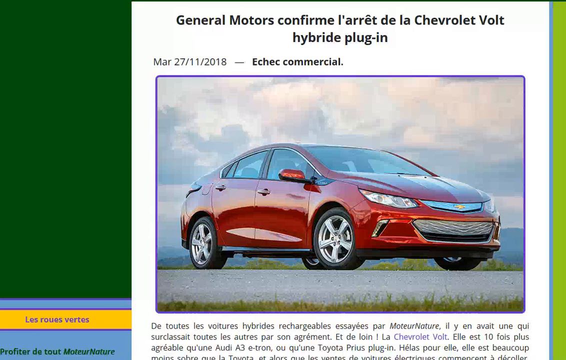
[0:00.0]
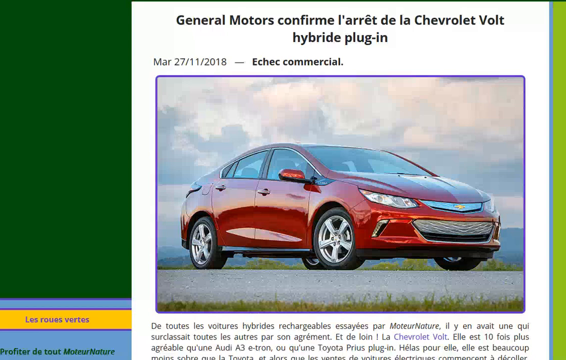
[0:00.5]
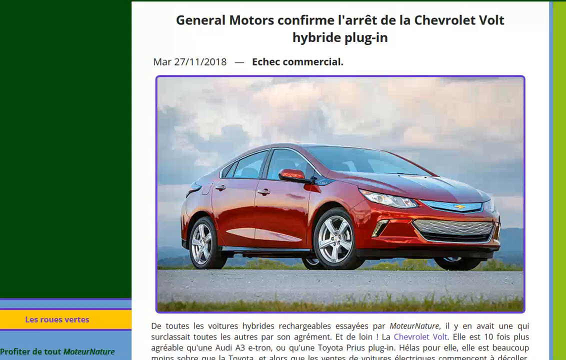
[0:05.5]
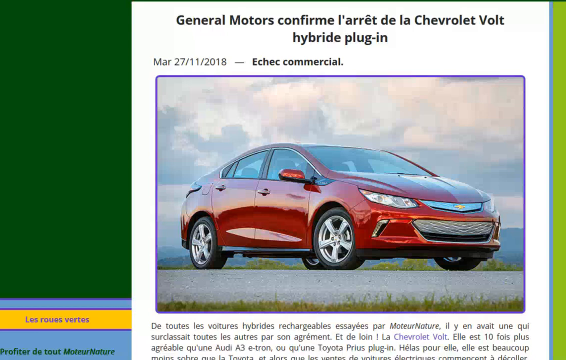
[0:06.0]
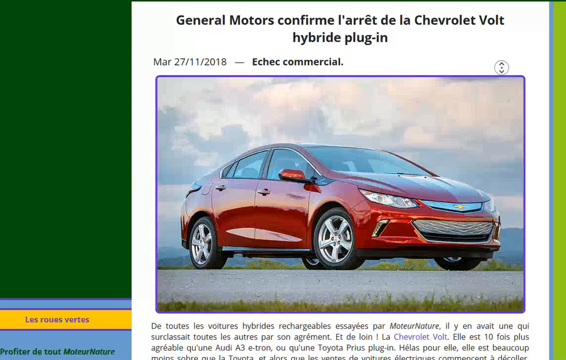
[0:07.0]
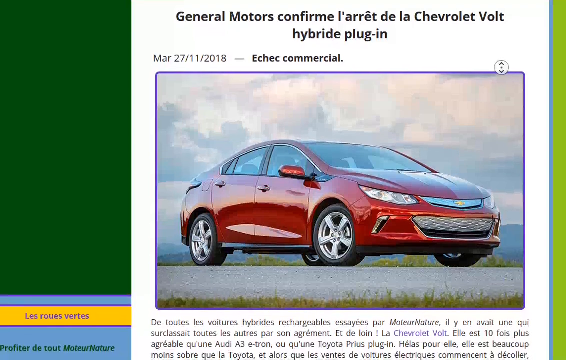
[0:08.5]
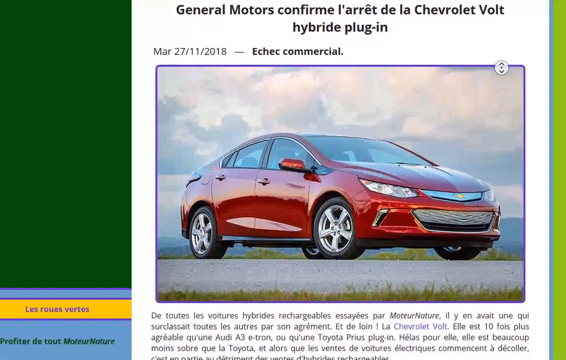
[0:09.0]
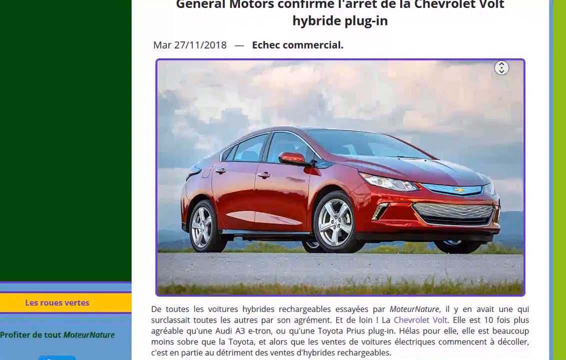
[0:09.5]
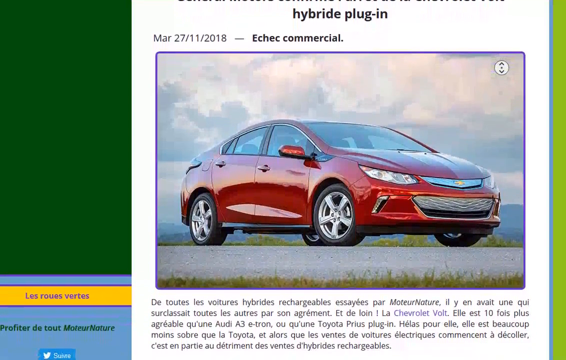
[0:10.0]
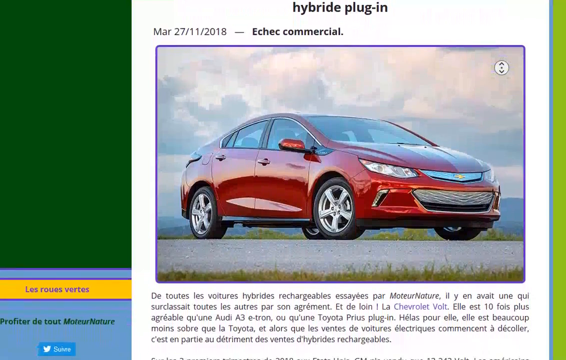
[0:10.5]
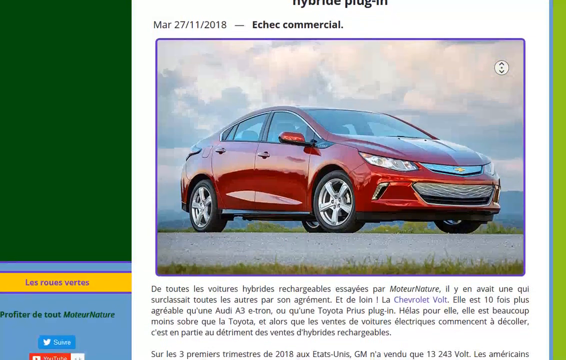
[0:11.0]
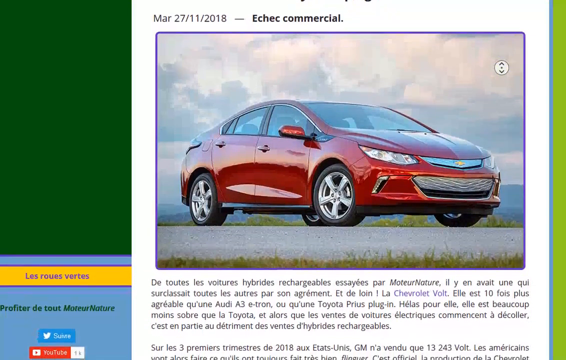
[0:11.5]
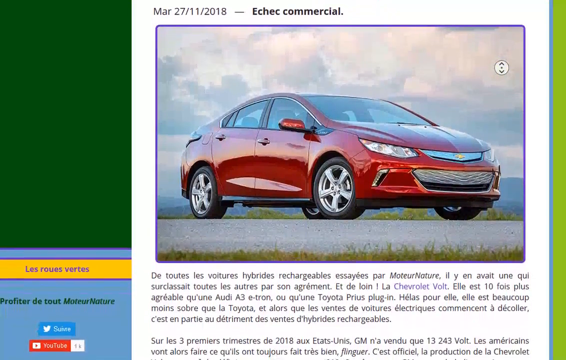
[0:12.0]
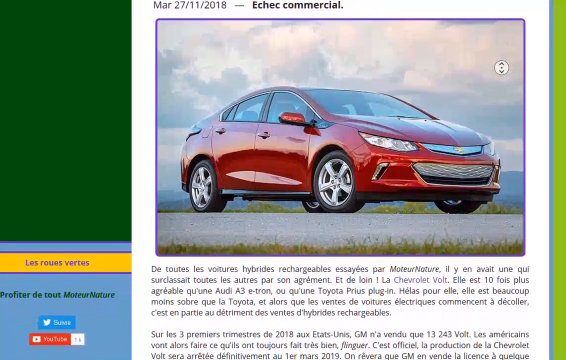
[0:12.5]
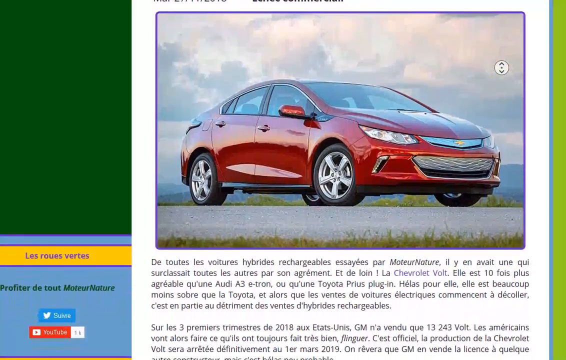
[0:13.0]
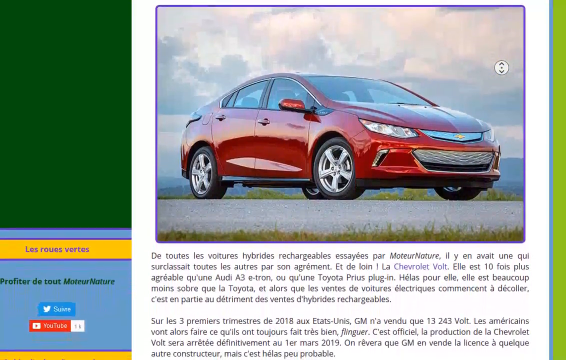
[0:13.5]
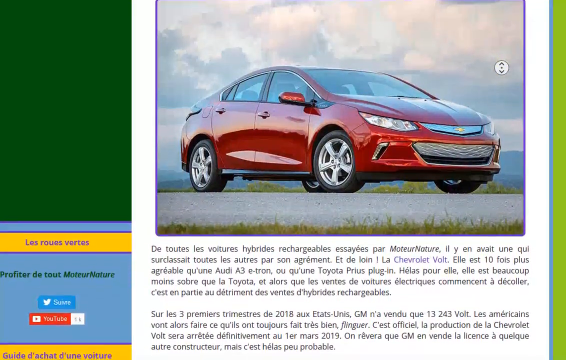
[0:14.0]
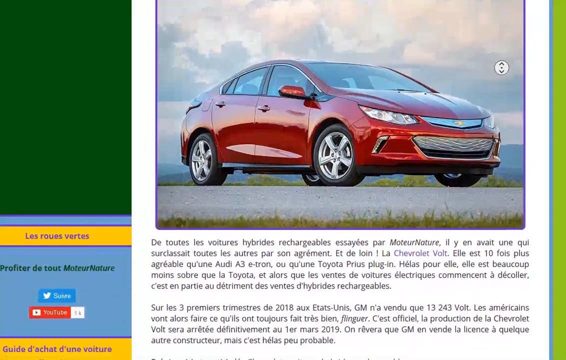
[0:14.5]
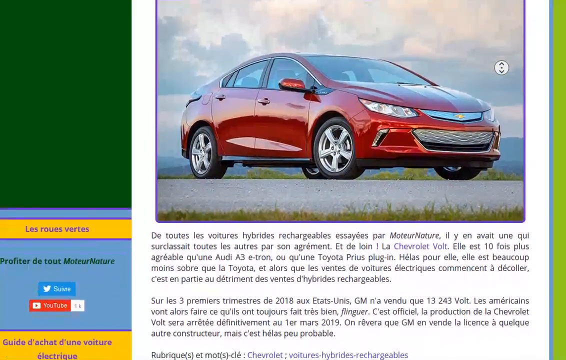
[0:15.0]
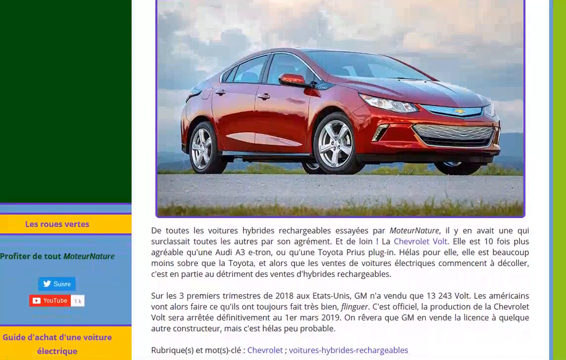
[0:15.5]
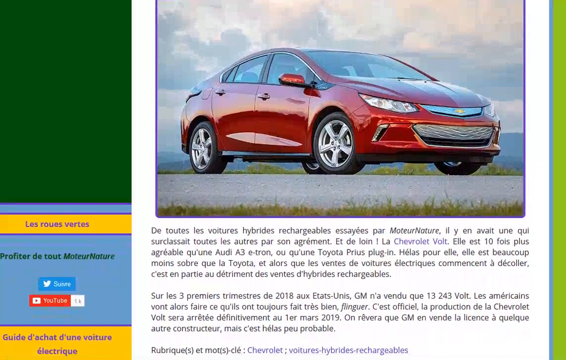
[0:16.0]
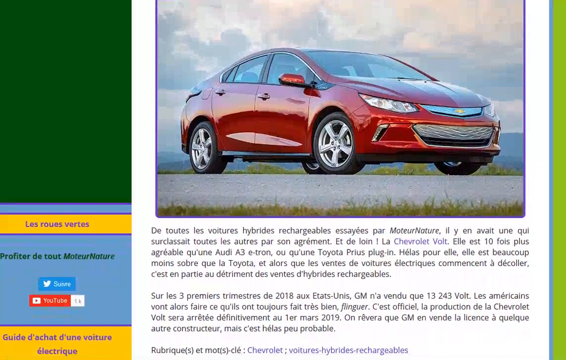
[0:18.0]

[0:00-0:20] A car appears on the right side of the frame: a Chevrolet Volt, a plug-in hybrid by General Motors. The car is dark red and has four doors; it looks like a sedan. The view moves down, revealing a description of the car at the bottom, with the picture on the right side above it. The image is taken from a website, and the description is written in a foreign language. To the left, next to the description, there is a YouTube link and a Twitter link. In the picture, the car is parked in an open area on light gray ground, with quite large clouds in the sky above.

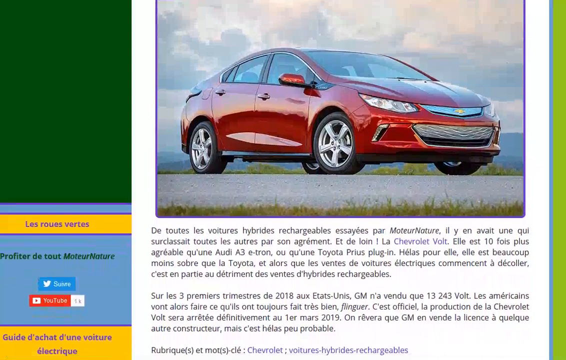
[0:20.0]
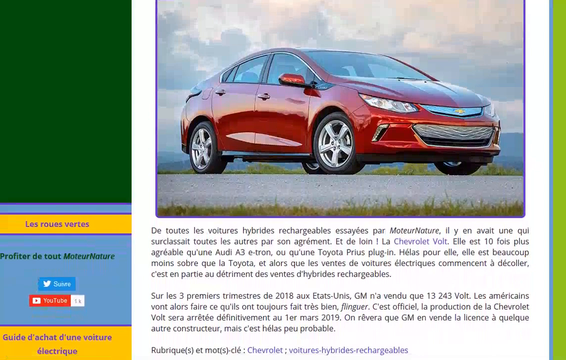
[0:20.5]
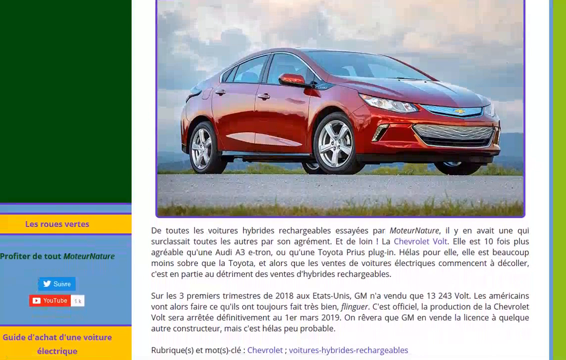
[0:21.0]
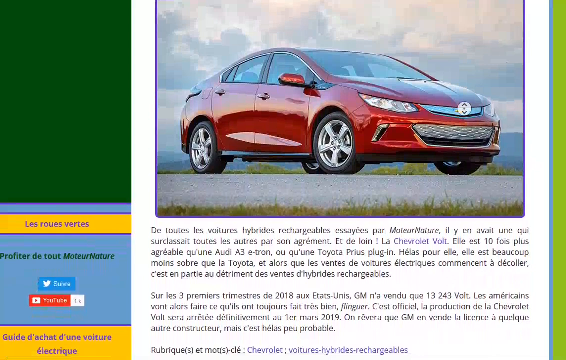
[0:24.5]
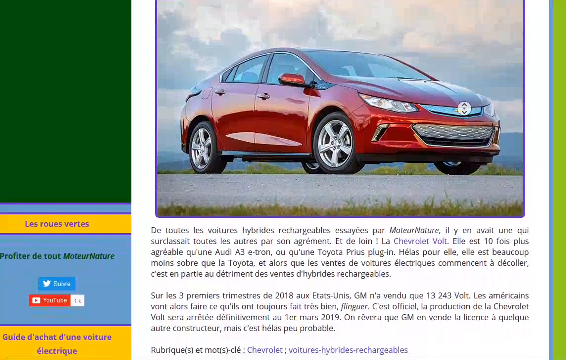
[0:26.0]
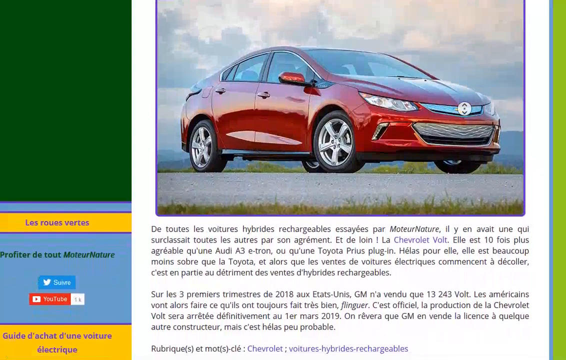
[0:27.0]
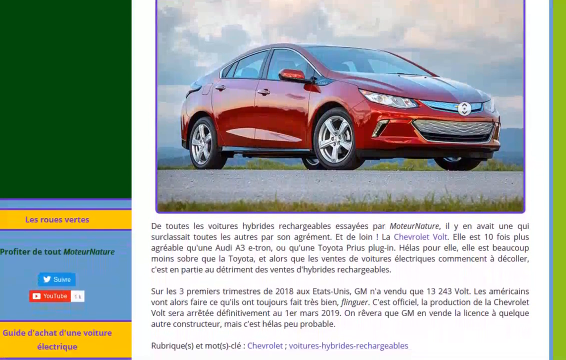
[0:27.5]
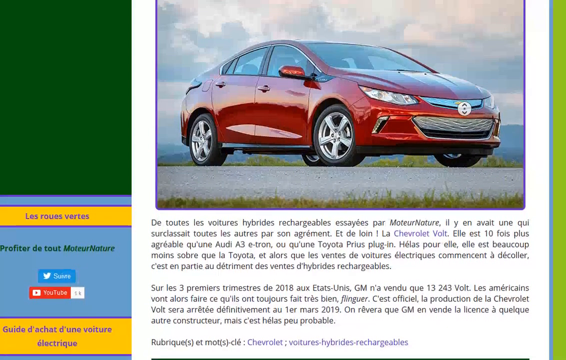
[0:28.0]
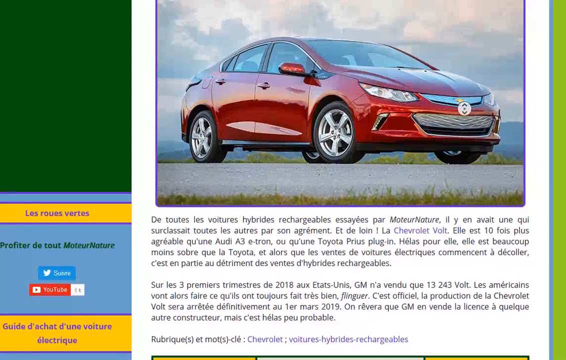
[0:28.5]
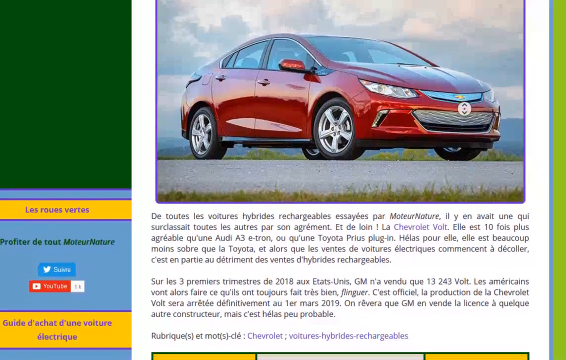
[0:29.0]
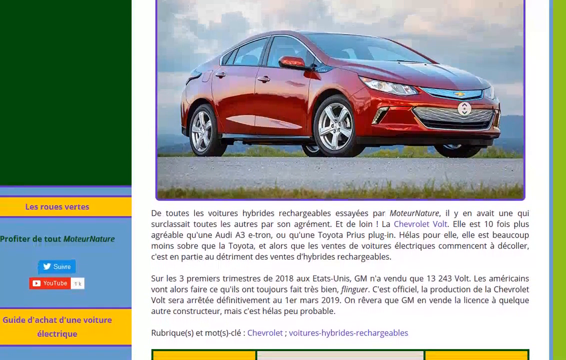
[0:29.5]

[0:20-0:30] The car remains in the top right section of the webpage, with the description below it. The view scrolls downward, slightly revealing more of the description, which is all in a foreign language. The car, a Chevrolet Volt, is dark red and brand new. Two doors are visible on its right side, along with a slight view of the back headlight. The two front headlights, the grille and the hood are visible; the hood looks very shiny as it reflects light off its right side.